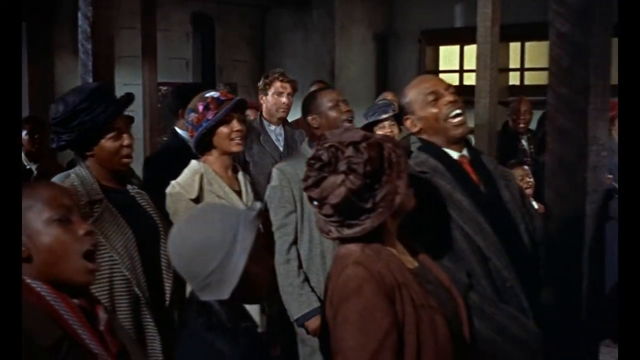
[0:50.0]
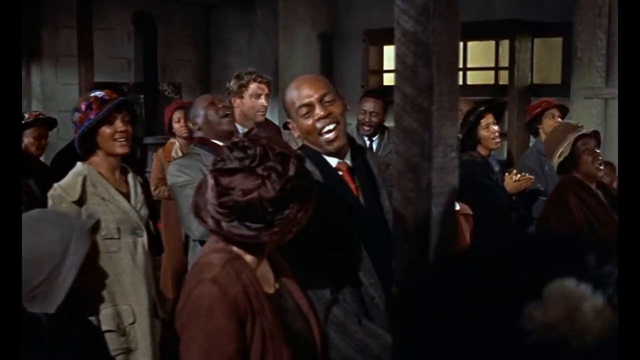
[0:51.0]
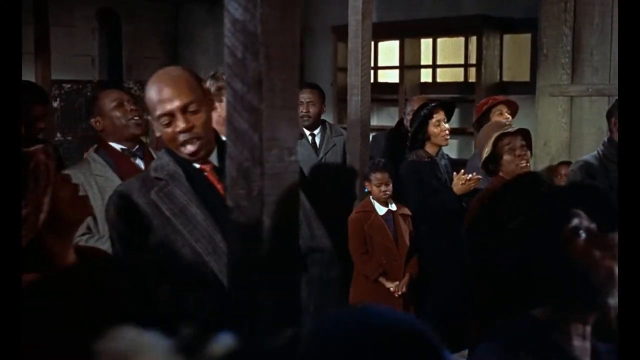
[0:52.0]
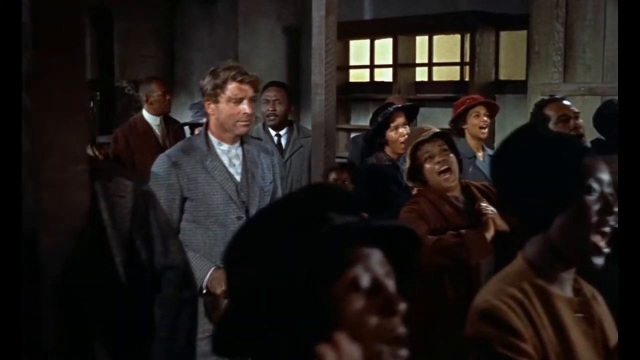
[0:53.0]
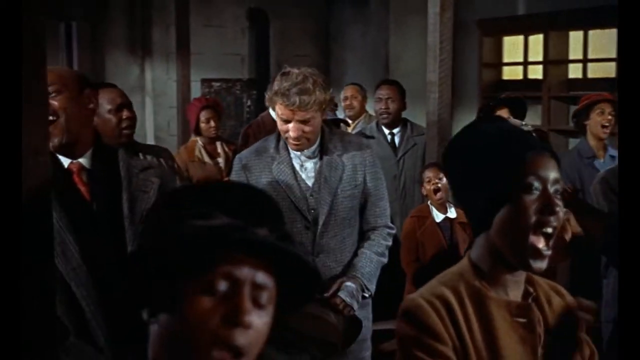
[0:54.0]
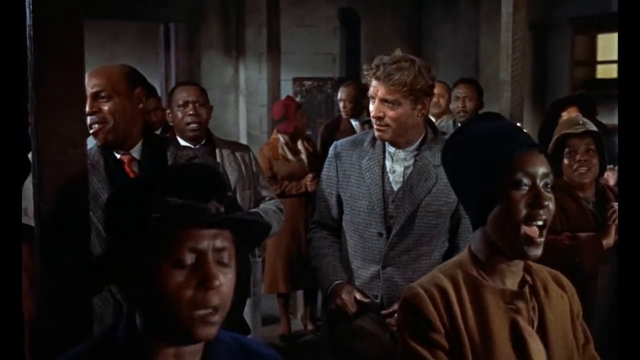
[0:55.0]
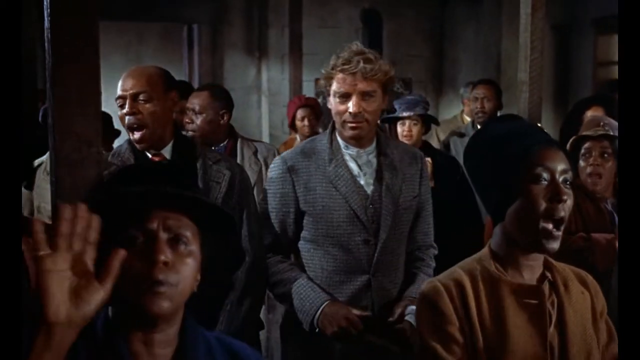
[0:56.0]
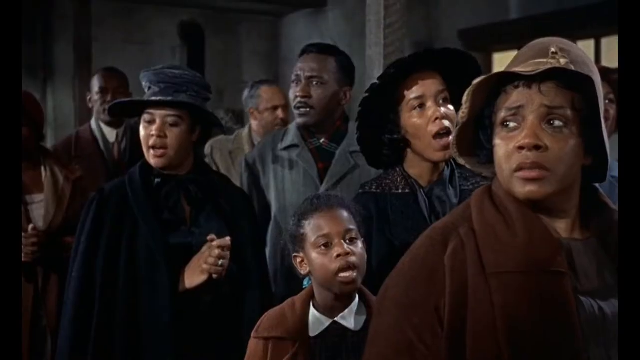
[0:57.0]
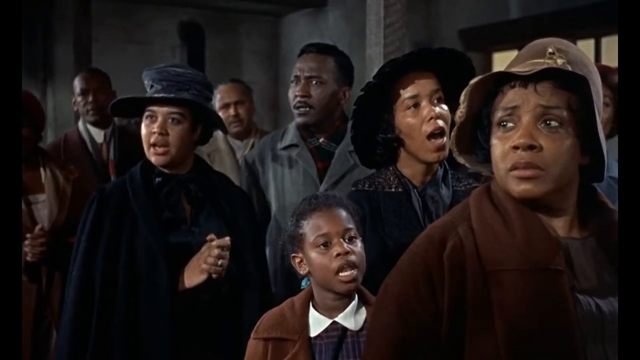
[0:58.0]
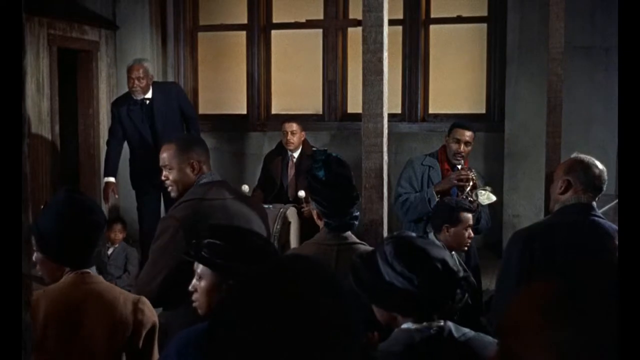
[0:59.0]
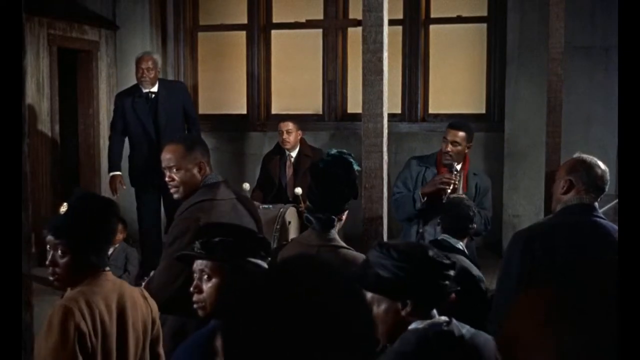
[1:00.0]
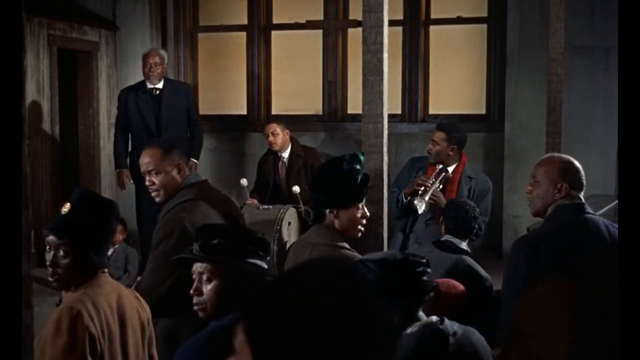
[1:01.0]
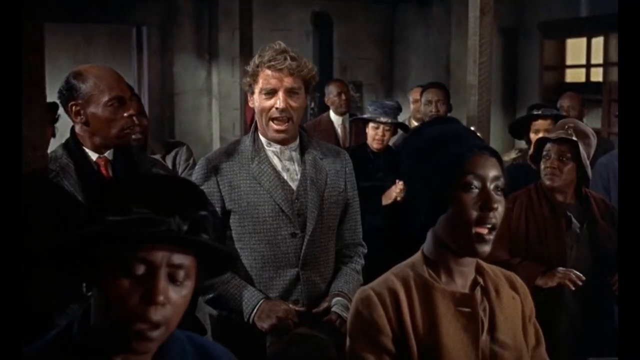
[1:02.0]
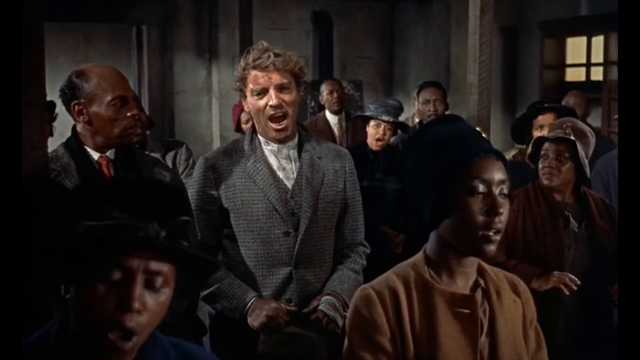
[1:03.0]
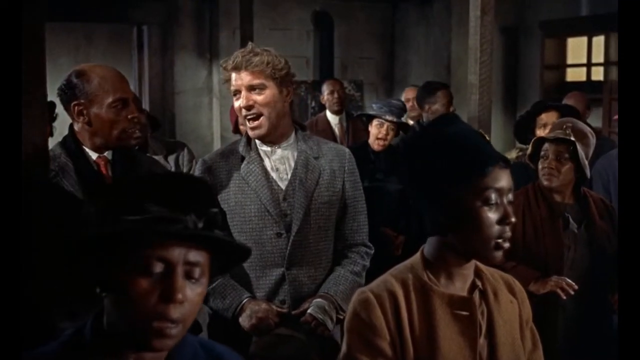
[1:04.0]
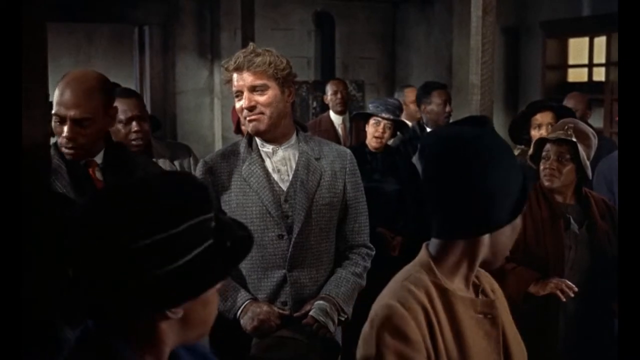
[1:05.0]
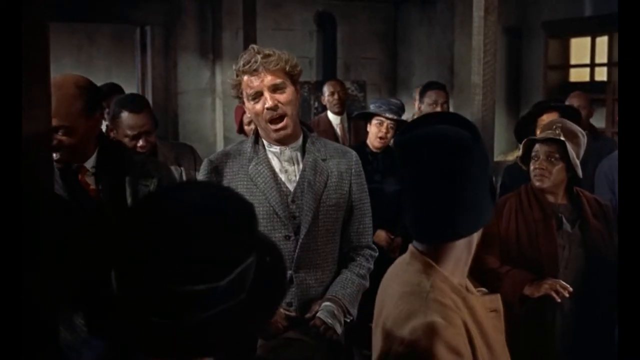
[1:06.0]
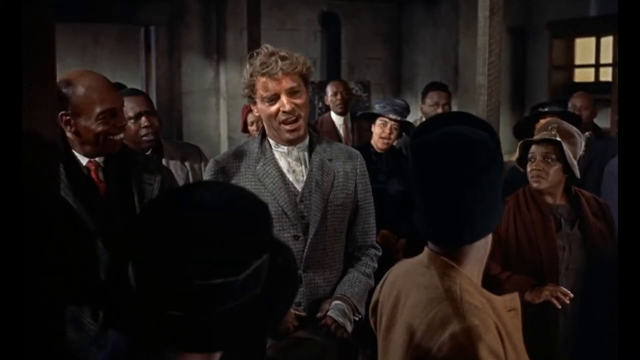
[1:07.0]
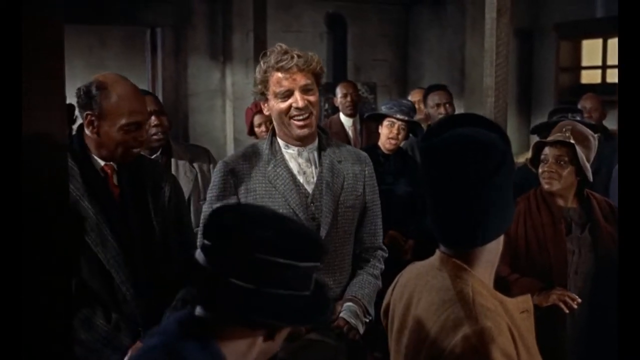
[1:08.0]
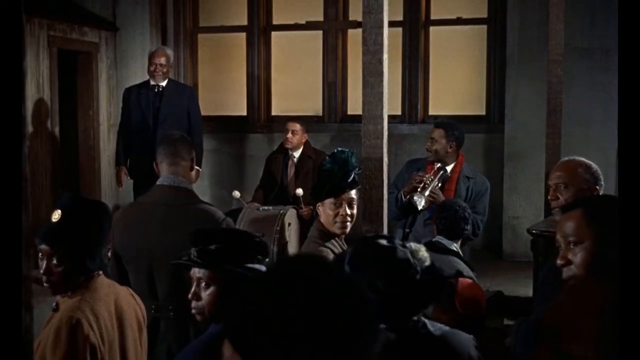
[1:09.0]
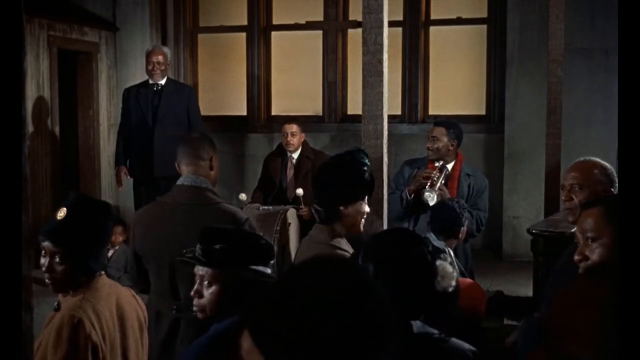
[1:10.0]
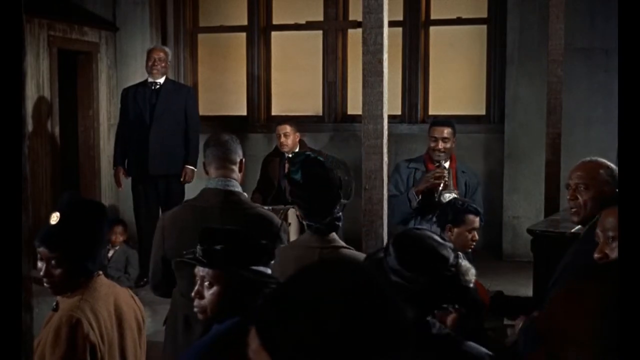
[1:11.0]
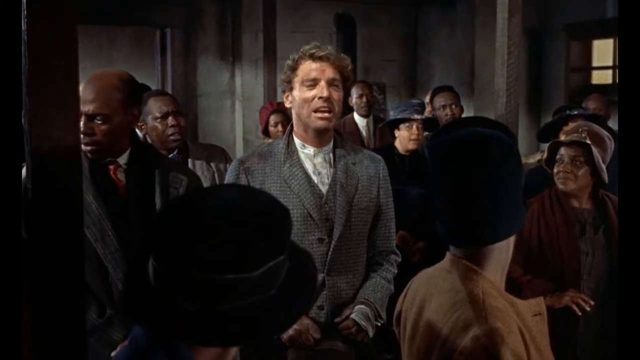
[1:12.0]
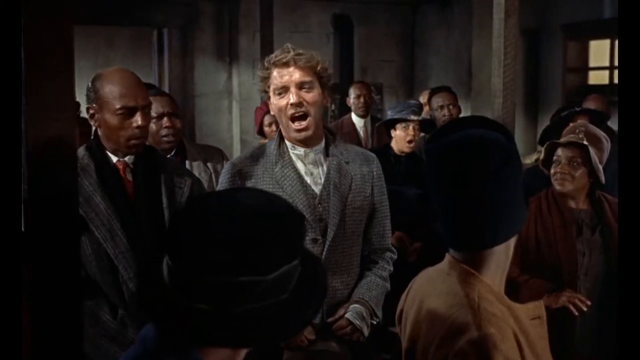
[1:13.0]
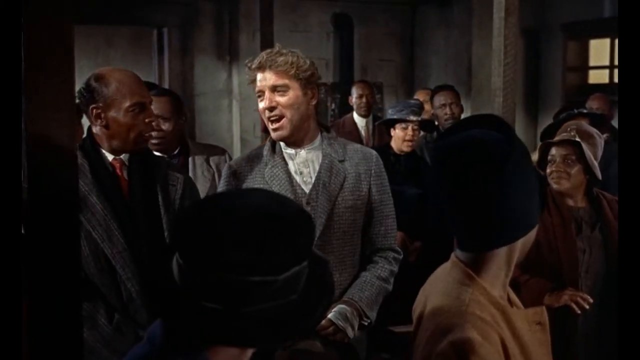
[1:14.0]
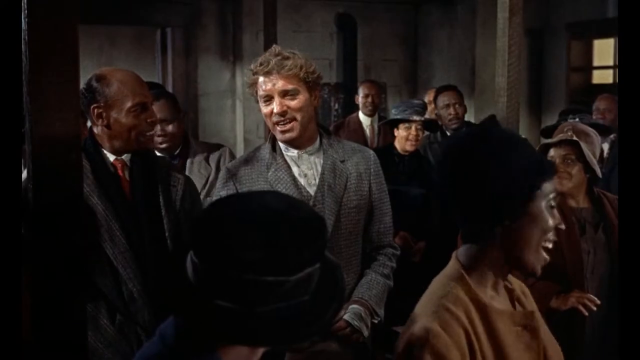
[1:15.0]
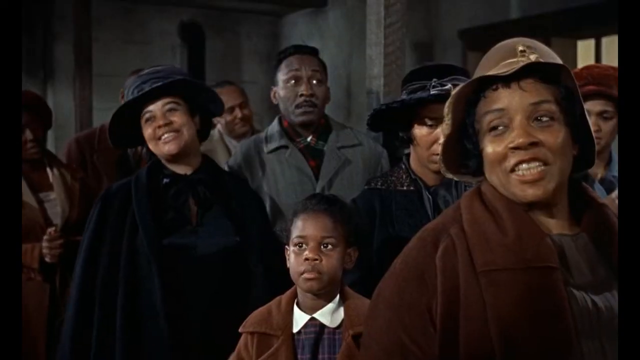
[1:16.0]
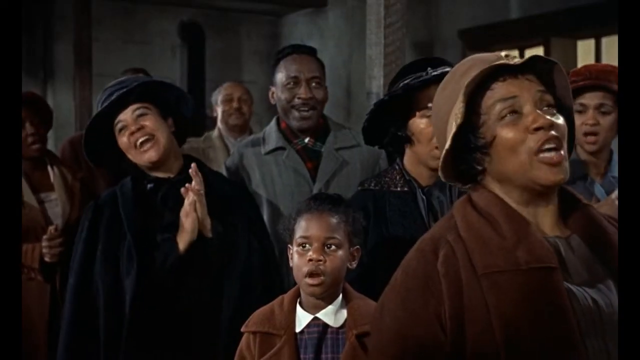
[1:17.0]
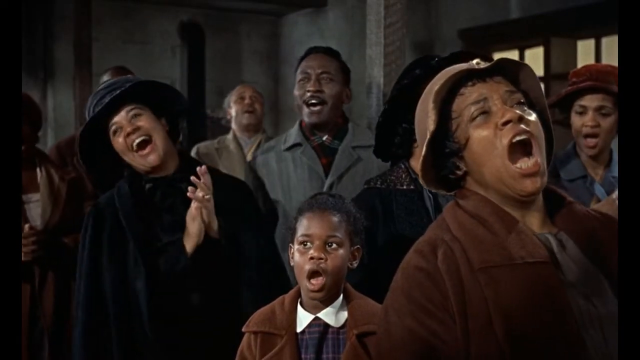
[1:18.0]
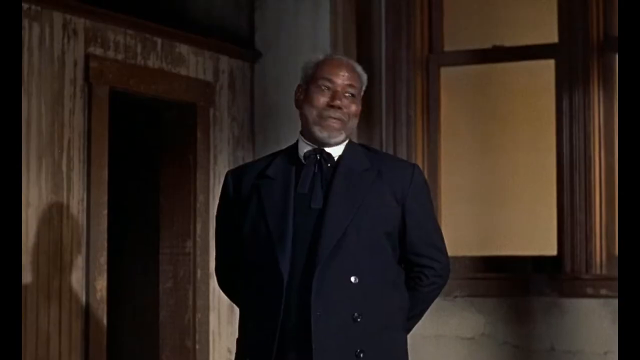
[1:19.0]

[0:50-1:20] The man walks through the middle of the room with groups of people on either side. The entire room is filled with black people, including the people up on the stage. There are three people on the stage: one with a saxophone, one who seems to be playing the drums, and one who is singing. They all look back at the white man walking through the room and stop singing; everyone appears shocked and turns to look at him, confused. The man suddenly smiles and starts singing, possibly the same song everyone else was singing. Seeing this, everyone appears relieved and starts smiling while looking at him. A woman behind him starts singing with him, and slowly everybody joins in and continues the song, both the crowd and the people on stage.